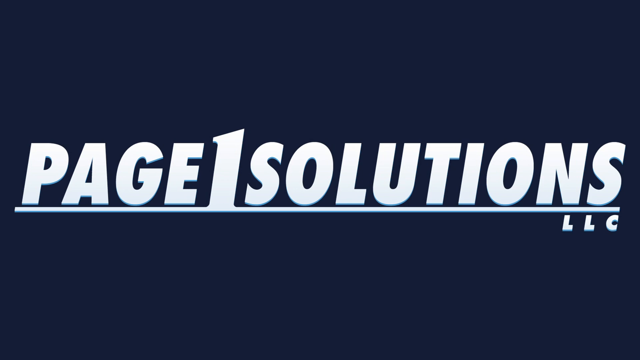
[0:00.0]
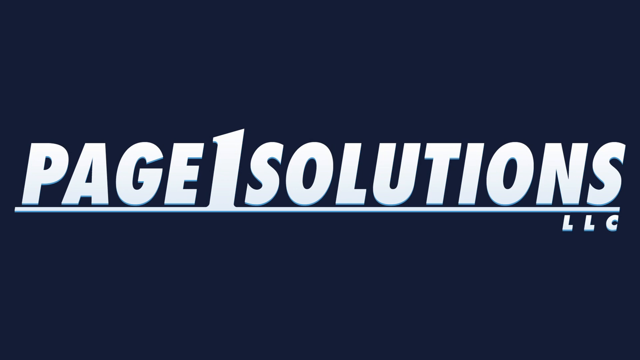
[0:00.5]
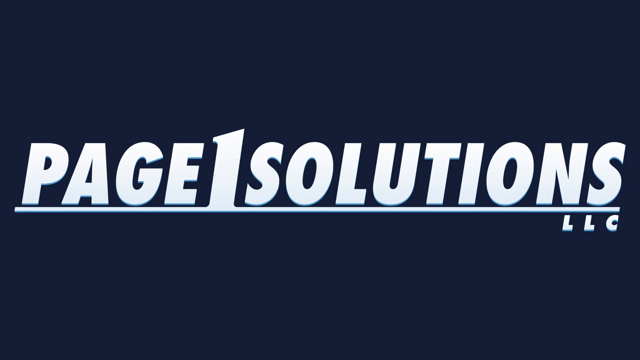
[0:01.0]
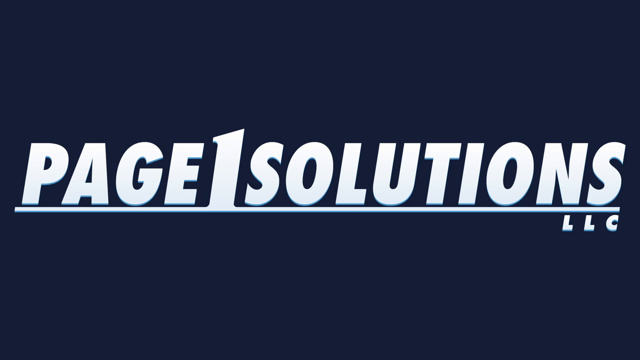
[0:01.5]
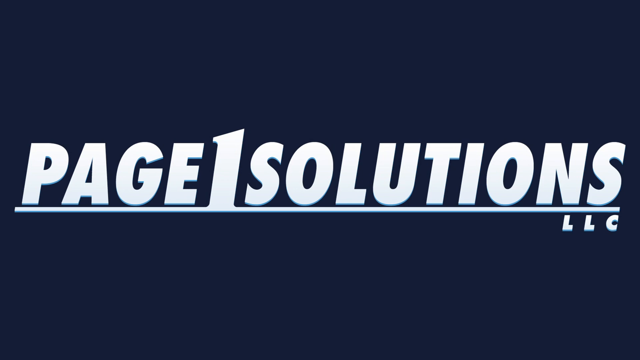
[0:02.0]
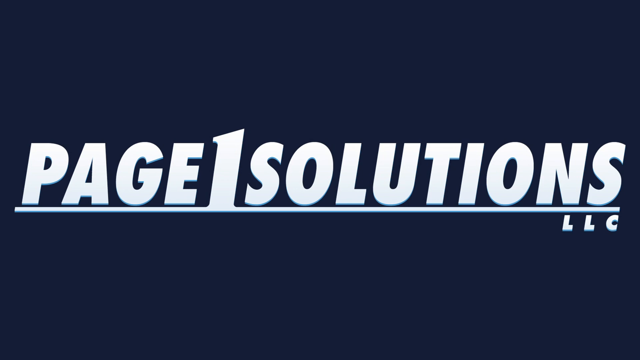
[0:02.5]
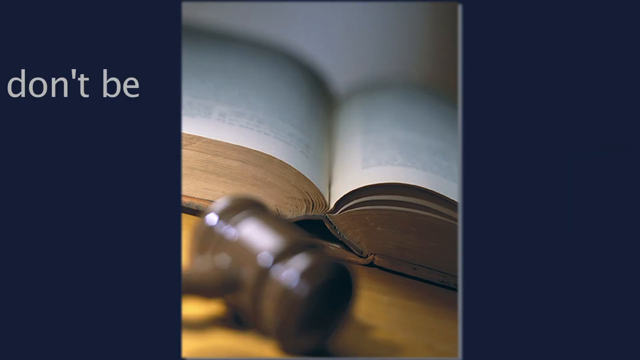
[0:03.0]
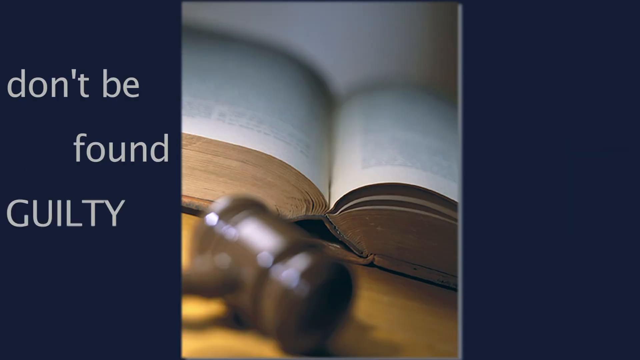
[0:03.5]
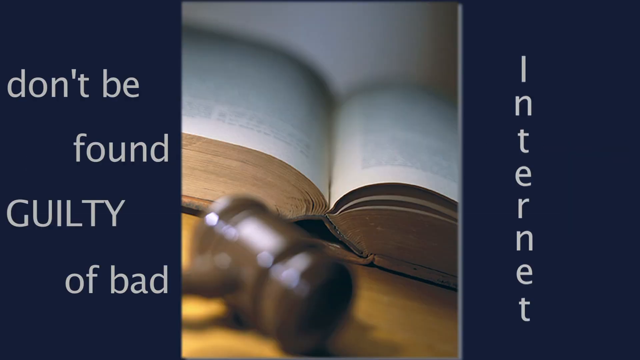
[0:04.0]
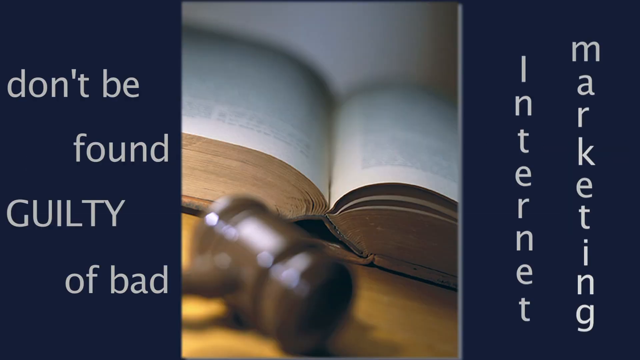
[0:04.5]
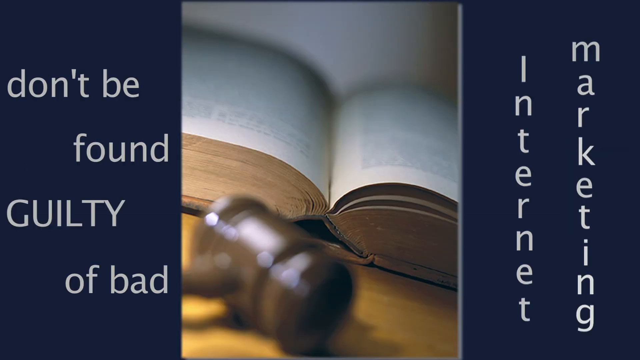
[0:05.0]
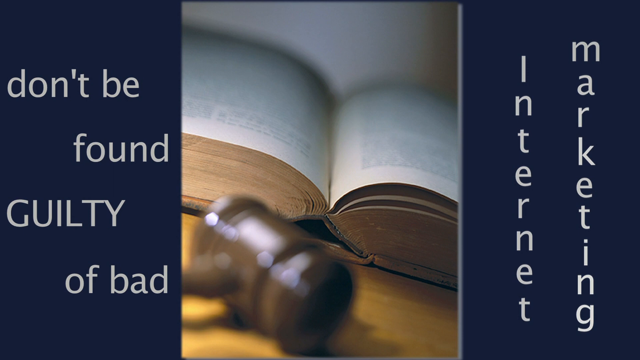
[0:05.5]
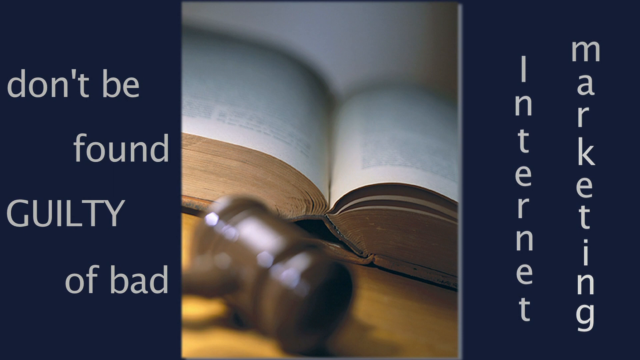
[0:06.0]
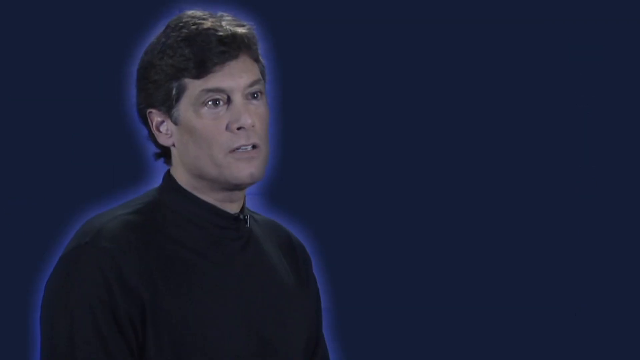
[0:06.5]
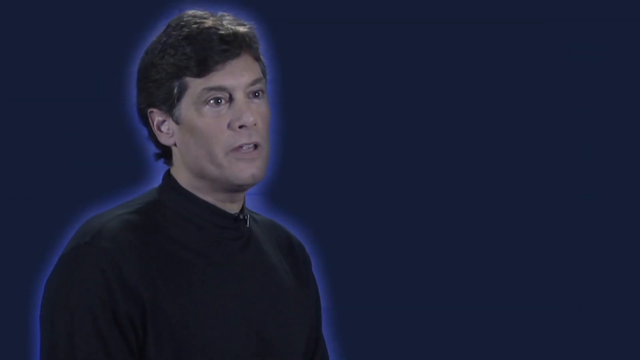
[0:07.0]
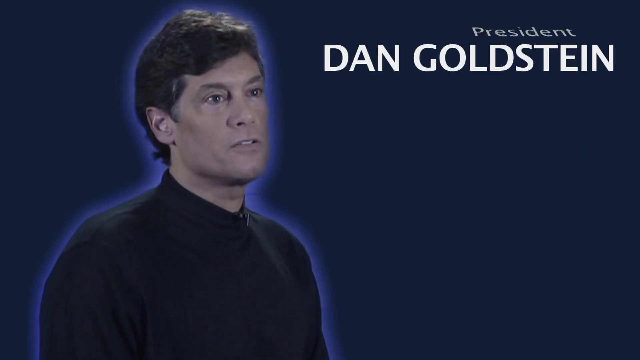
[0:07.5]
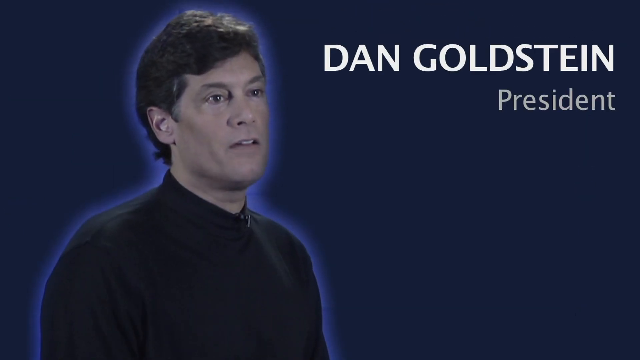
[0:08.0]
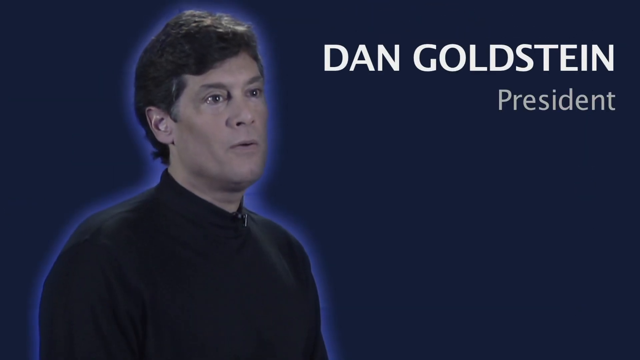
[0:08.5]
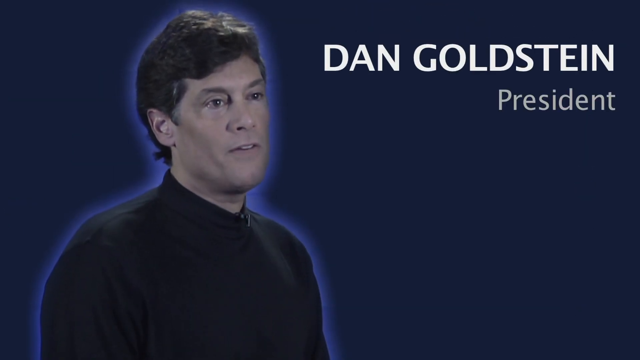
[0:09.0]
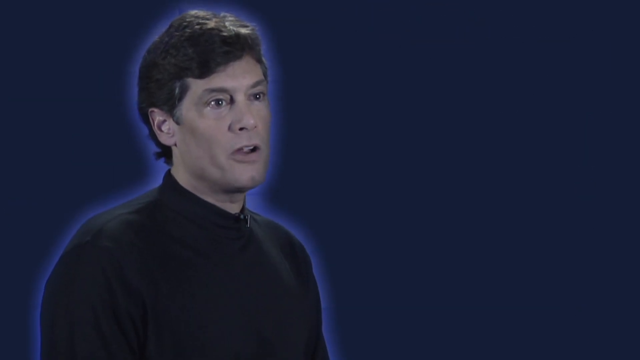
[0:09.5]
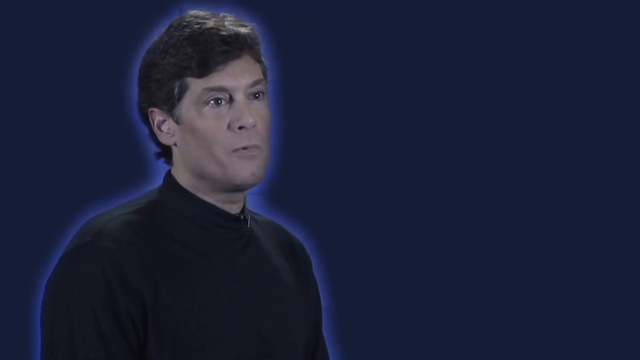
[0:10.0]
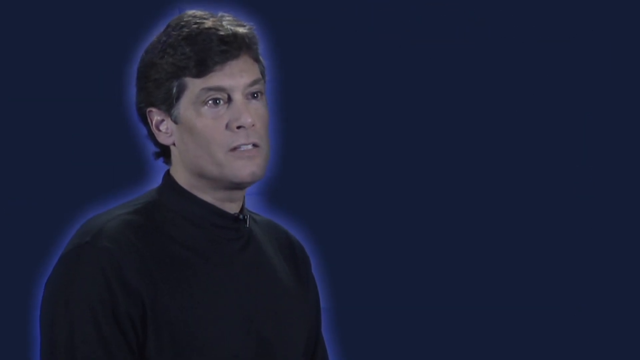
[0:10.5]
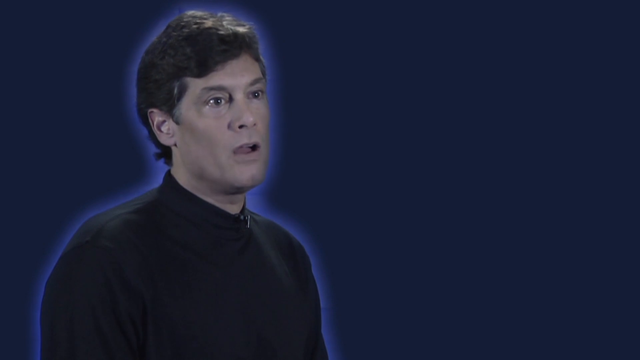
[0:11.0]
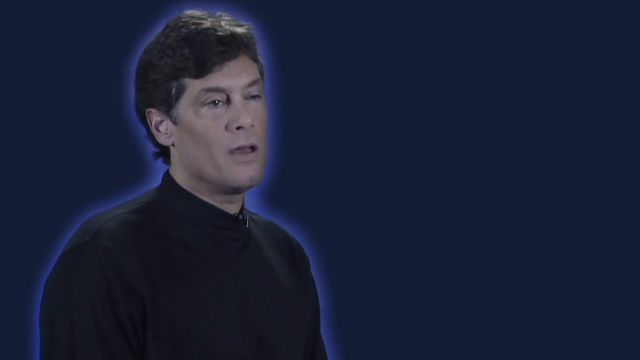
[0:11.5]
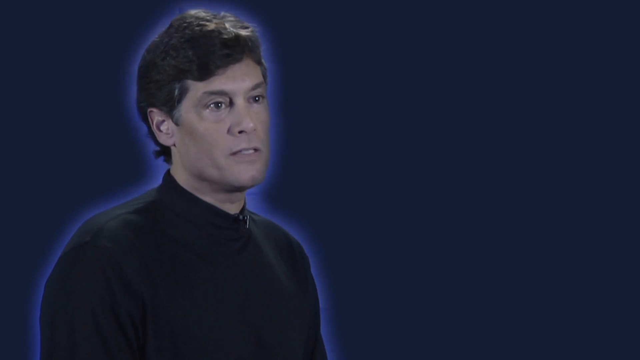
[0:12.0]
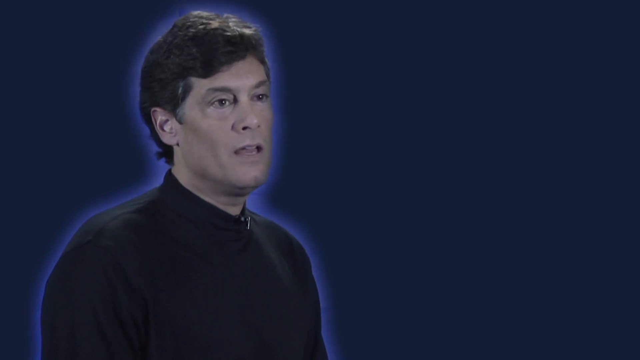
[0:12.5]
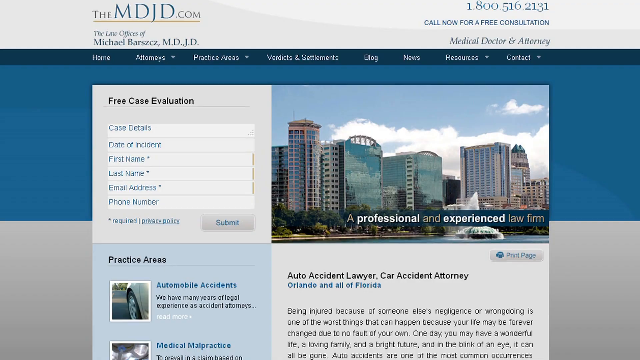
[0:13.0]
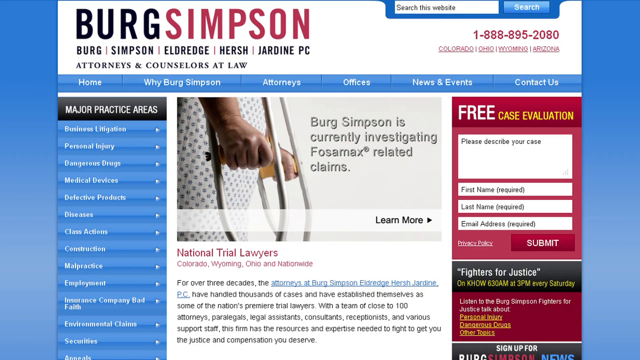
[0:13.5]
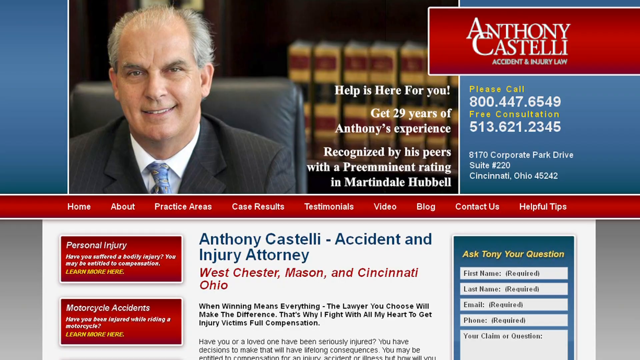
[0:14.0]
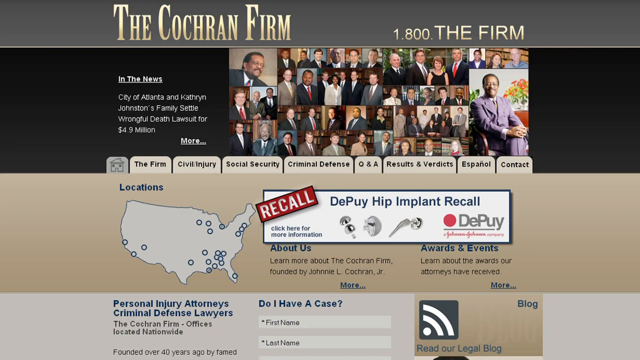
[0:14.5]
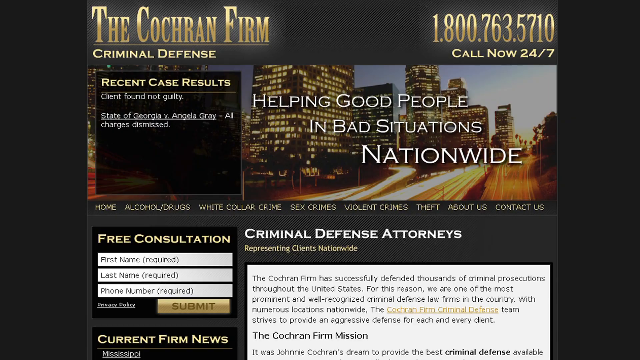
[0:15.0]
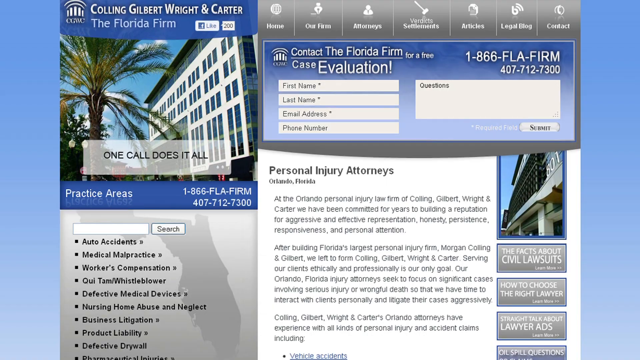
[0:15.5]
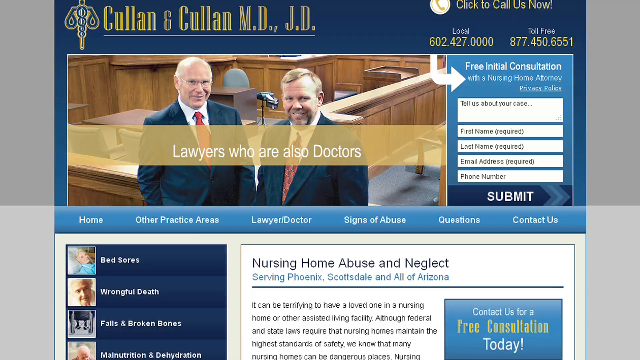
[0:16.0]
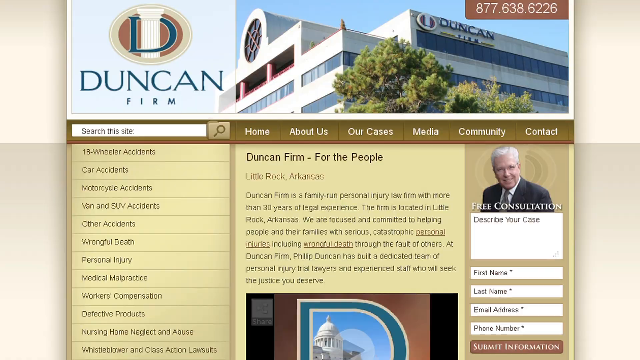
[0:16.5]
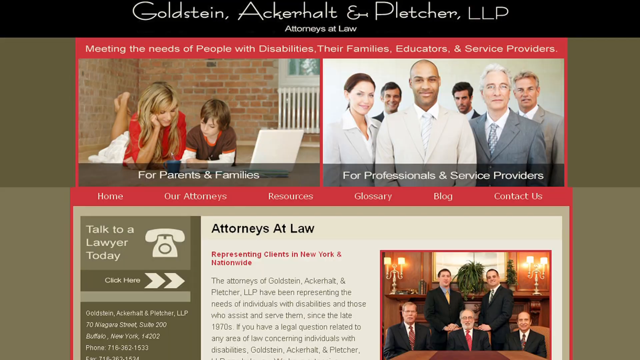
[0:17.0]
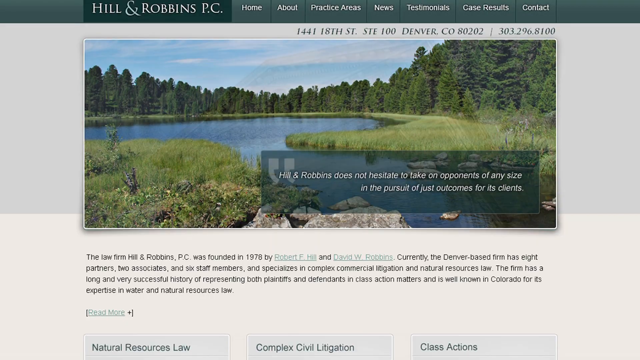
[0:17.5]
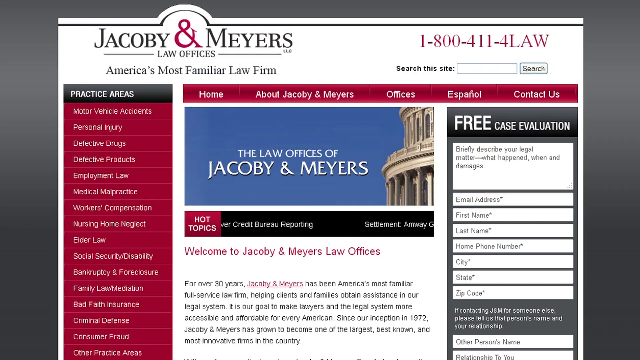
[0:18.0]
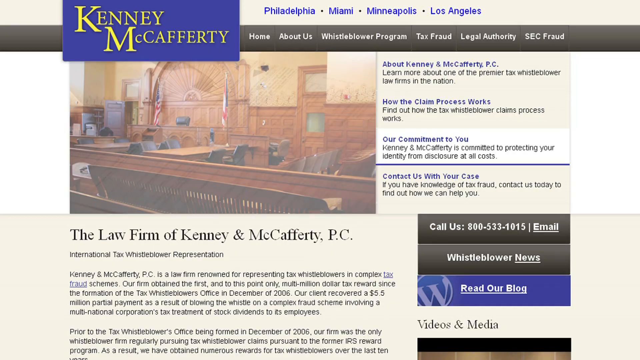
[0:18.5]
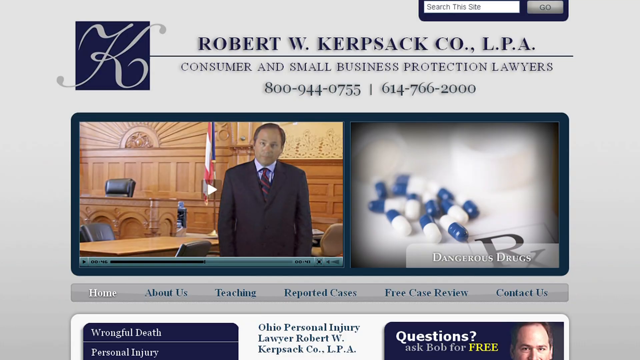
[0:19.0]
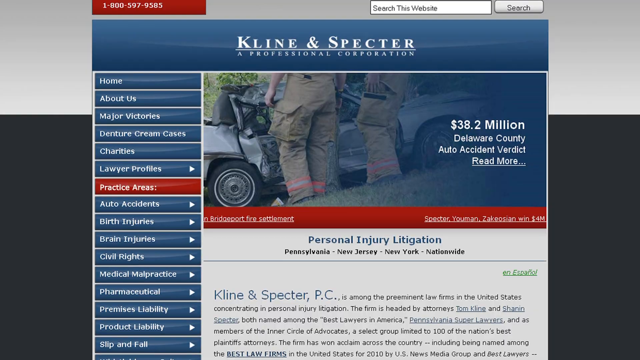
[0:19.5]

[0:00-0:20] The video opens on a black page with white print reading "page one solutions LLC." Next, words appear saying "don't be found guilty of bad Internet marketing," with a picture in the middle that is hard to make out. A man then appears, surrounded by a light blue haze, with his picture on the left and the text "Dan Goldstein president." He is talking and moves his head up and down a little. Various clips of all kinds of websites or advertisements, possibly ones he is in charge of, flash up at roughly one per second, apparently showing marketing solutions. One shows a man wearing a suit and tie with the text "Anthony Castelli Accident and injury attorney." Another says "the Cochran firm," has a phone number, and reads "nationwide helping good people in bad situations." Many of the flashed pages are law firms.